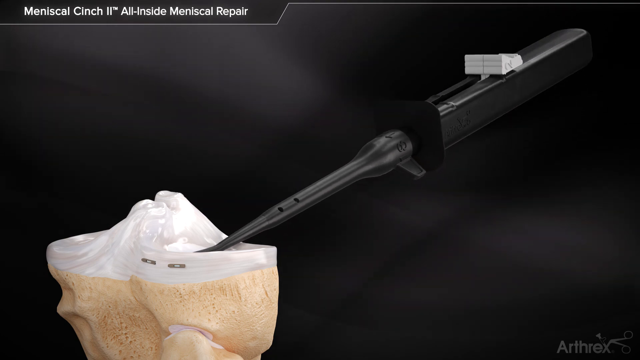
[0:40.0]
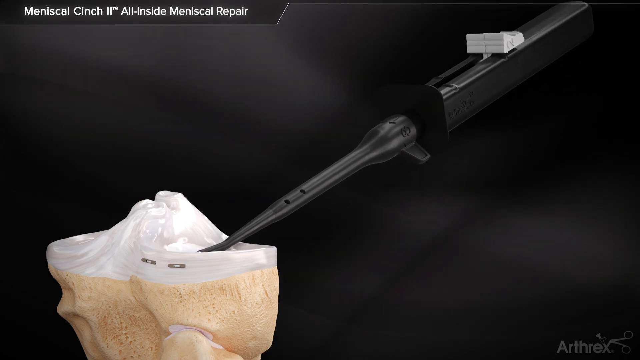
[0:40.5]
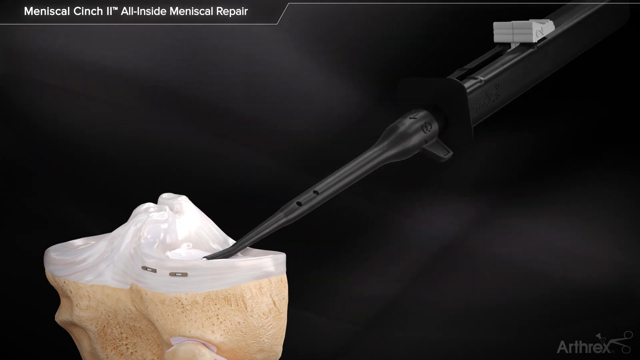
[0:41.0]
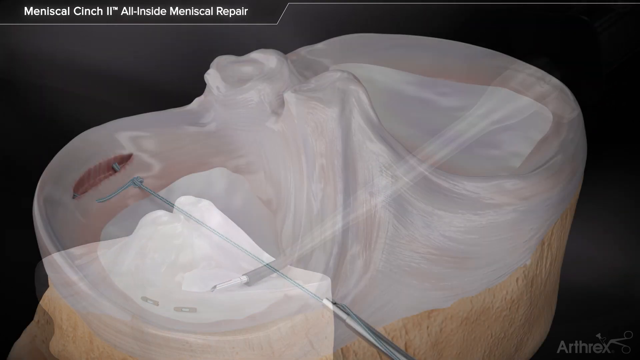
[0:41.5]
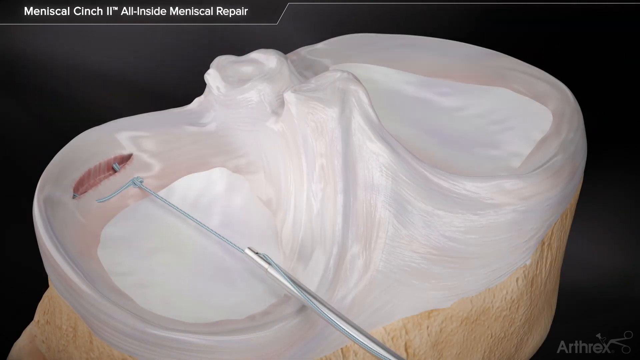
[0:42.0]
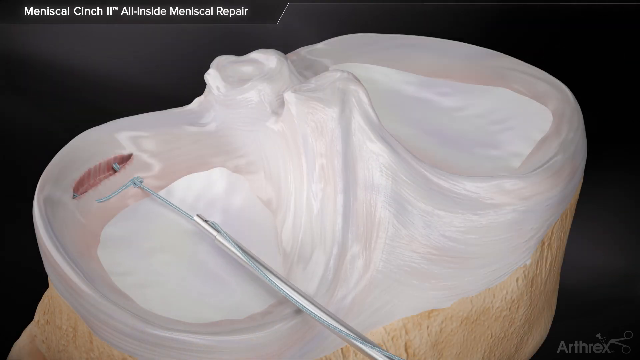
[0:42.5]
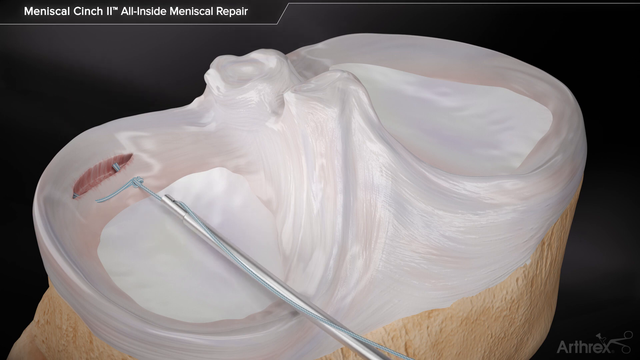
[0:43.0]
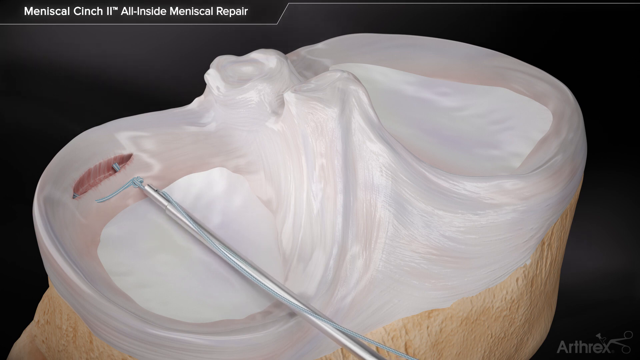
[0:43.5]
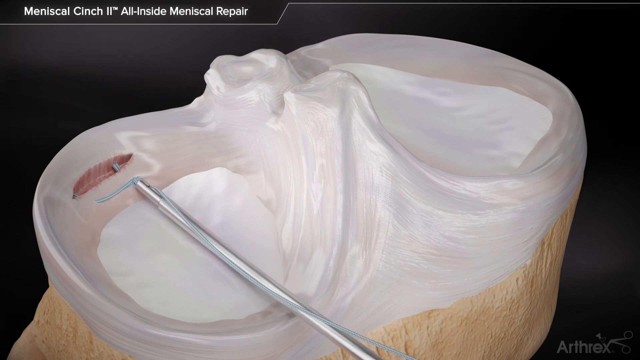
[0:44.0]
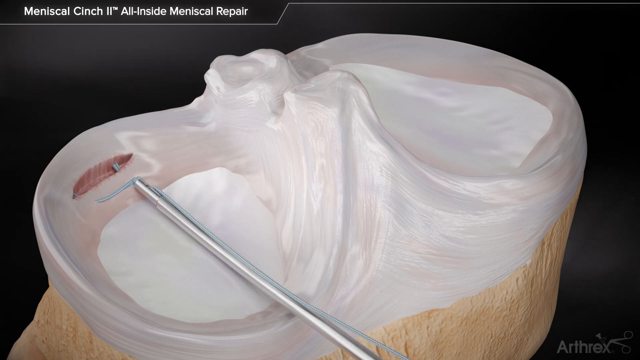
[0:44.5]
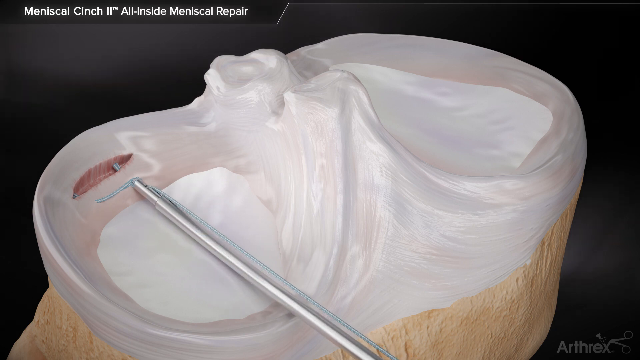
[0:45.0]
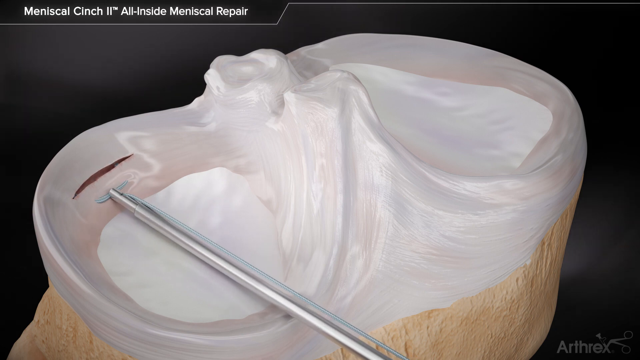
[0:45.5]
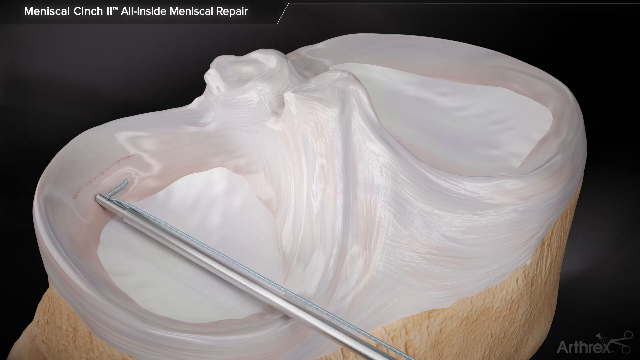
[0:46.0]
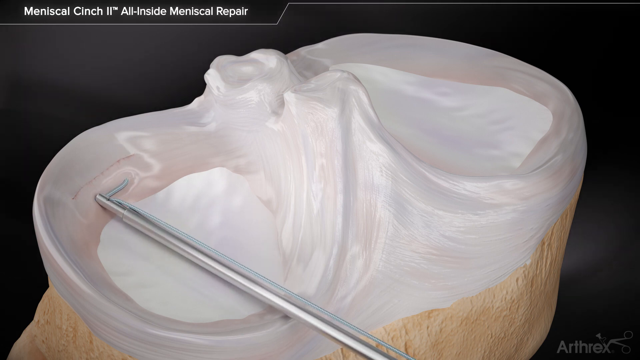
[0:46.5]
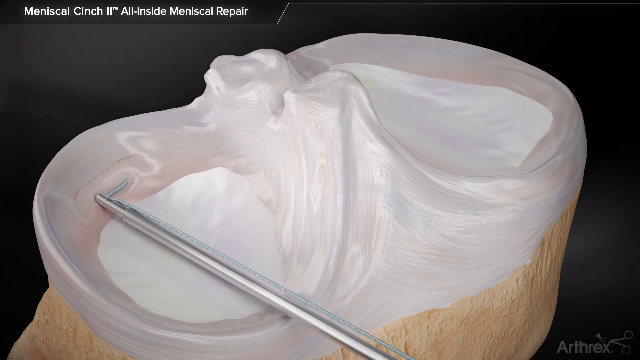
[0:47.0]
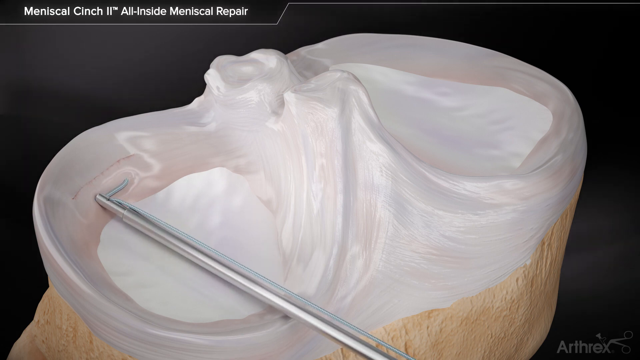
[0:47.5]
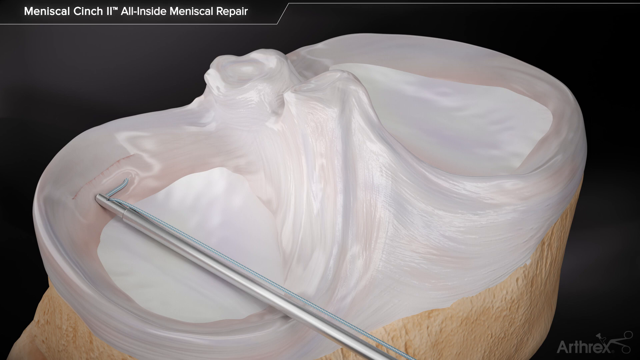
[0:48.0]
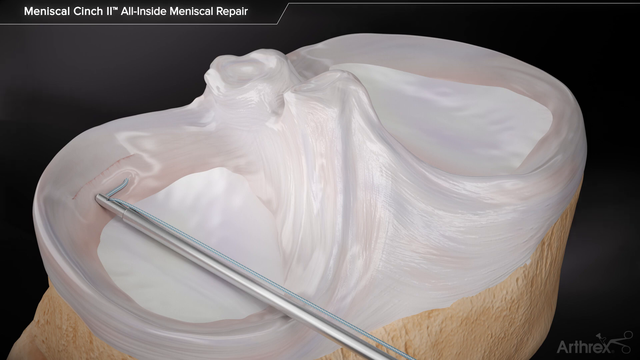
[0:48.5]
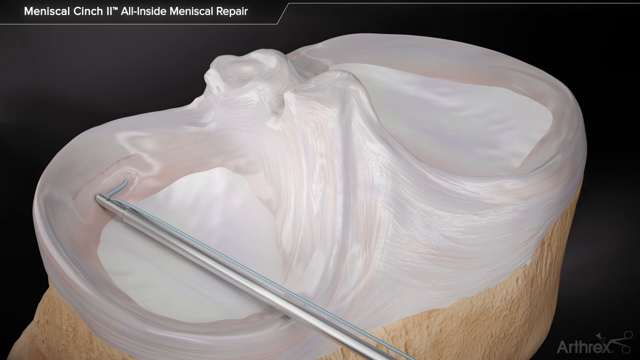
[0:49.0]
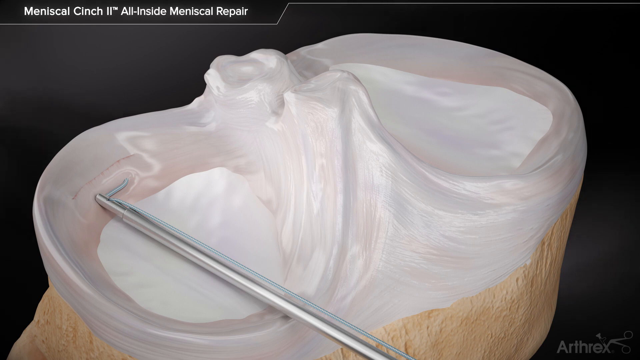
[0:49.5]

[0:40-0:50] At the bottom left is the object that needs to be repaired. Its top is a very white, sort of green color, with what looks like a very smooth surface and circular crevices in it. Attached underneath that smoother surface is a very tooth-like structure, hard and rough, in a light brown color. To its right, a plastic device presses into the left crevice of the object. At the top left of the video, text reads "All Inside Meniscal Repair." As the video plays, the plastic object on the right moves upward a little. The scene then changes to show a metal object at the bottom of the video that appears to be shooting out some type of grayish liquid or string, which attaches to the inside of the left creamy-looking area. It pushes forward into the upper part of the left side of the white creamy area as it sort of locks in and zips up the damaged portion inside it.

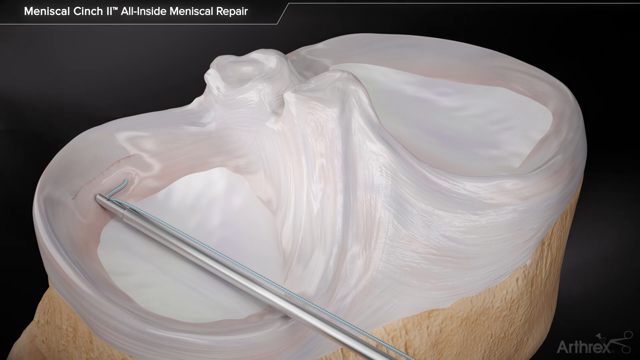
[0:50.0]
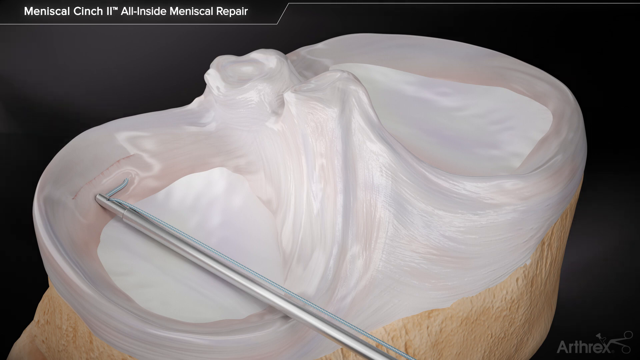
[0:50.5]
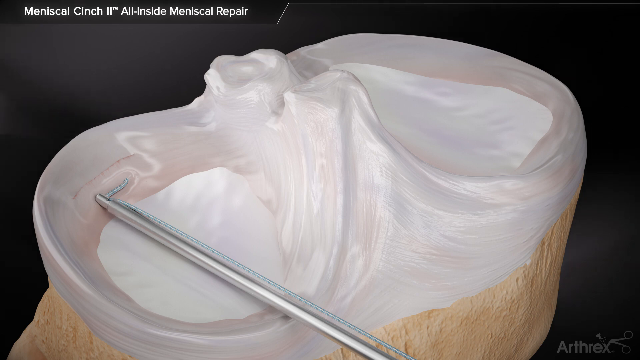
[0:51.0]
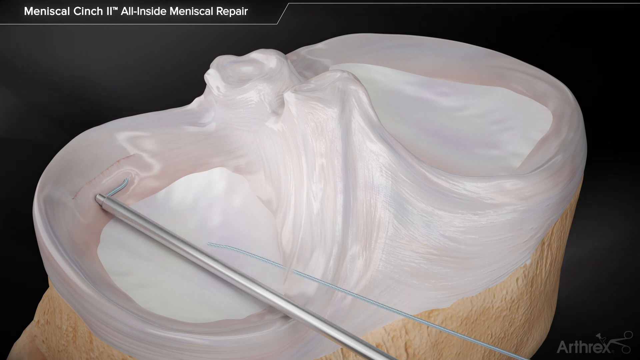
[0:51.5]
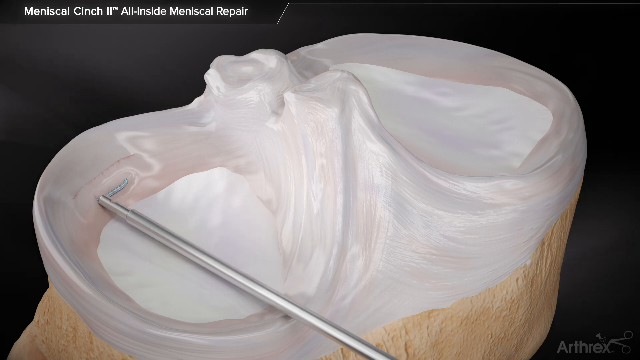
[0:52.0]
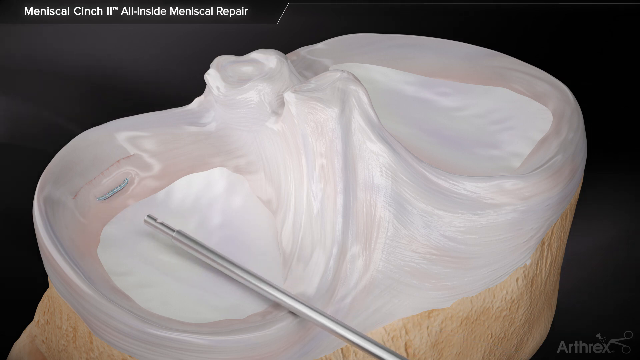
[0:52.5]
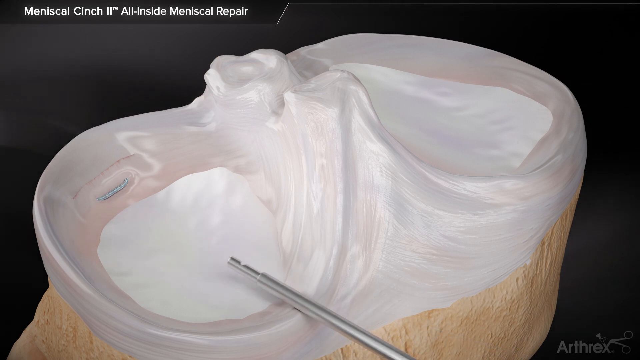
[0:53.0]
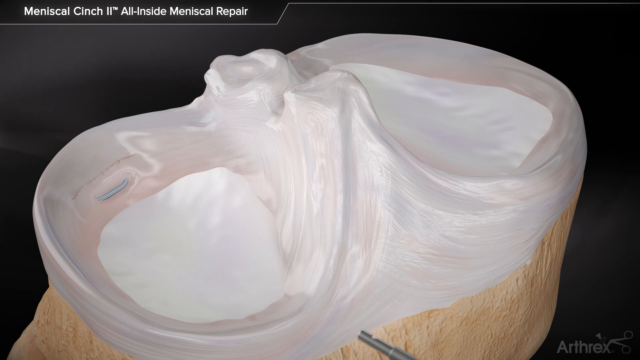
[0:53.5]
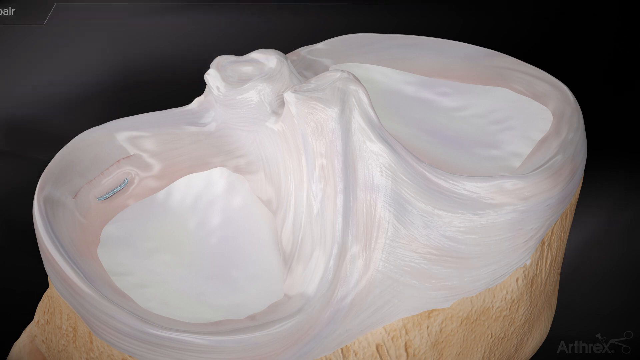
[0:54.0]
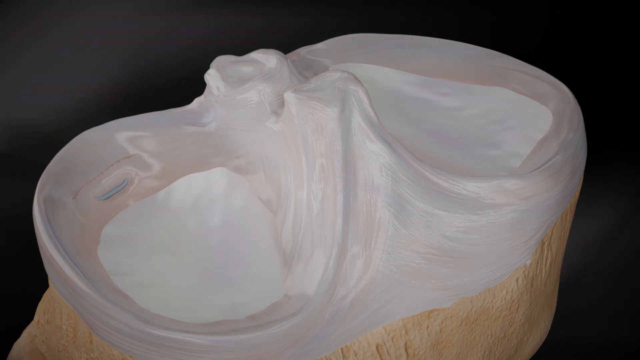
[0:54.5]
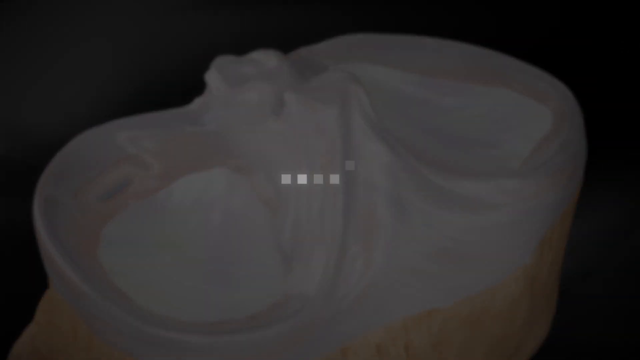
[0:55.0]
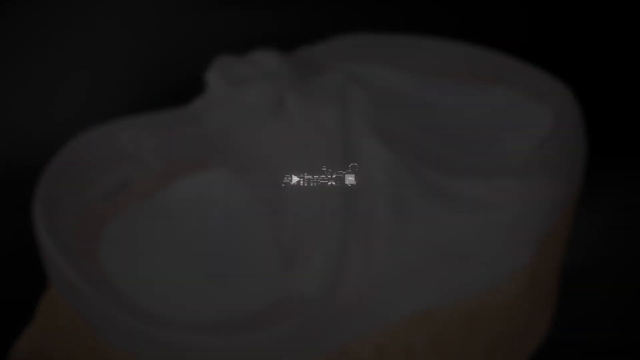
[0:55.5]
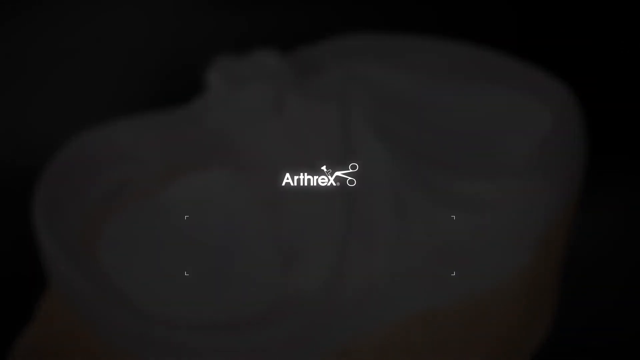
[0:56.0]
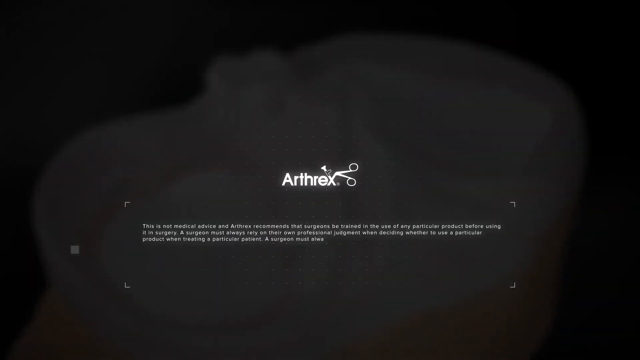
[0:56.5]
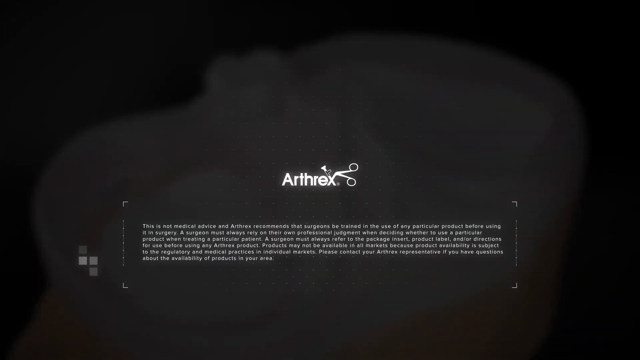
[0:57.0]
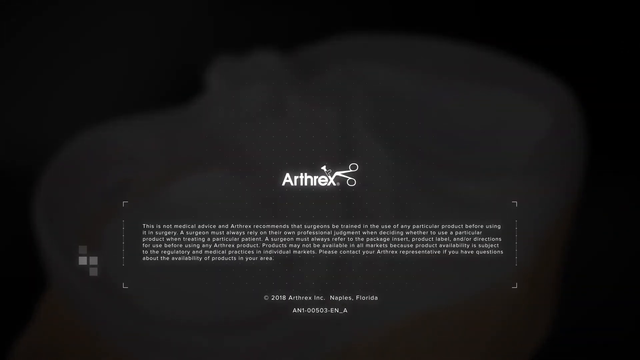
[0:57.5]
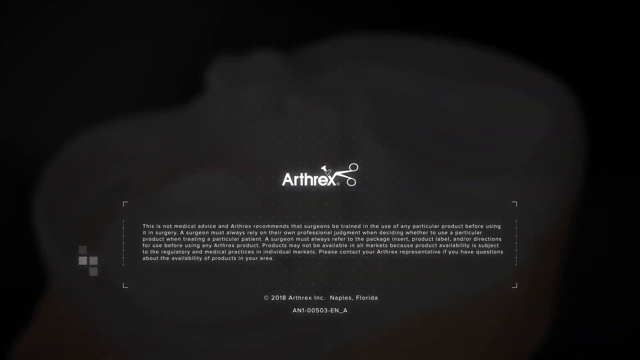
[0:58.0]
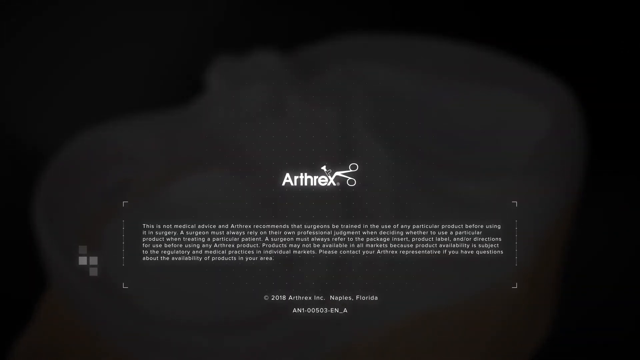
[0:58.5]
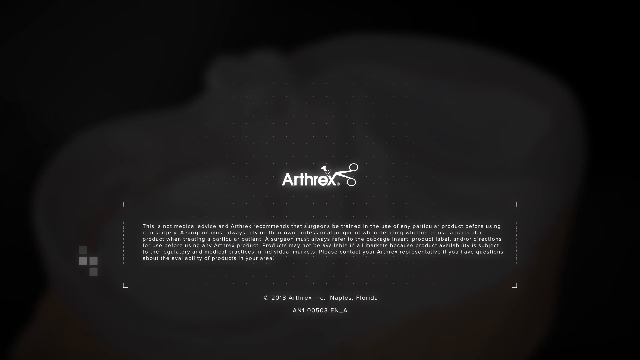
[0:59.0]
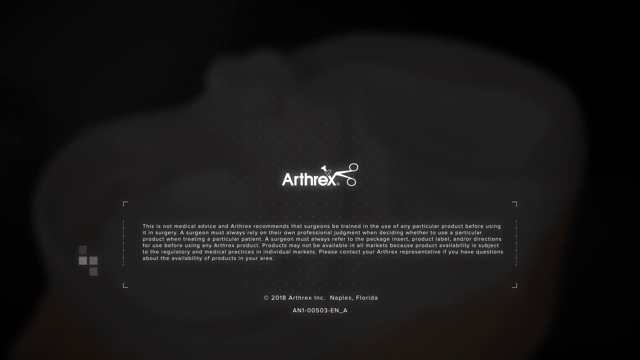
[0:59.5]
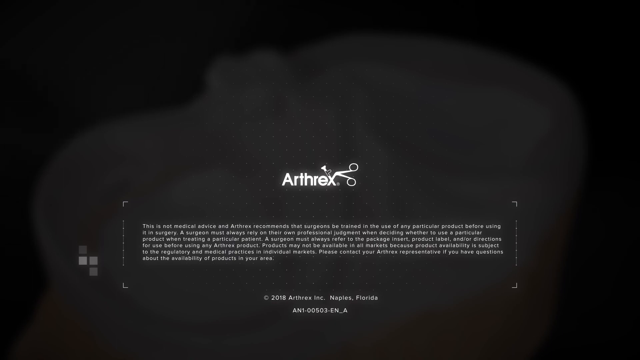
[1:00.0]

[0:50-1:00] An overhead view shows what looks like the object that needs to be repaired: a white, smooth surface with two circular portions on its left and right sides. At the very bottom of the video, a metal object with a long, pen-like portion presses into the top left of the object. The metal pen-like object is on the left side and seems to be tightening and locking in a part that was damaged. As the video plays, some string comes off the left-side object as it pulls away off camera. The screen then goes black, and in the middle the text "ARTNREX" appears, with images of scissors appearing and cutting. At the top left, the words "MENISCAL CINCH 2 all inside MENISCAL REPAIR" are shown.